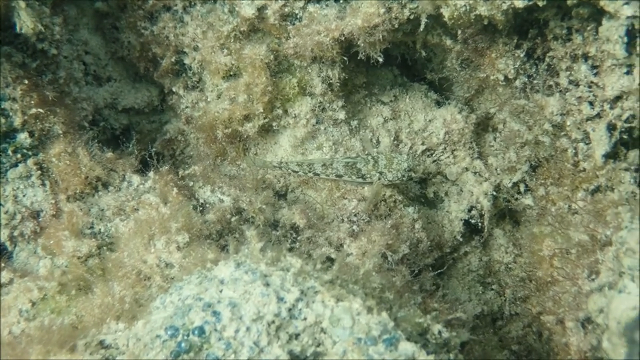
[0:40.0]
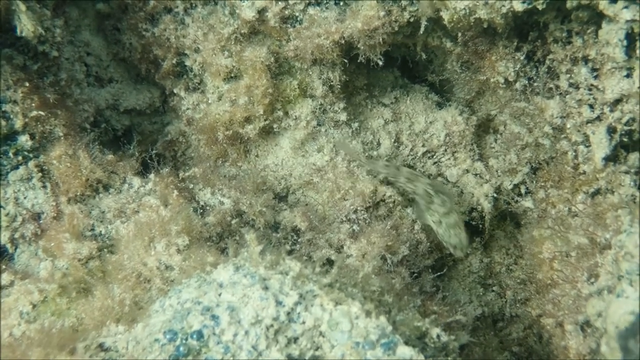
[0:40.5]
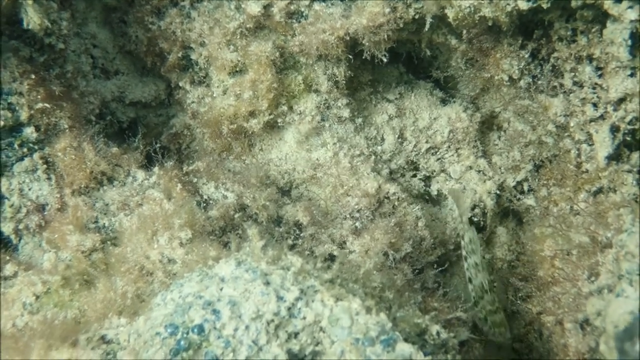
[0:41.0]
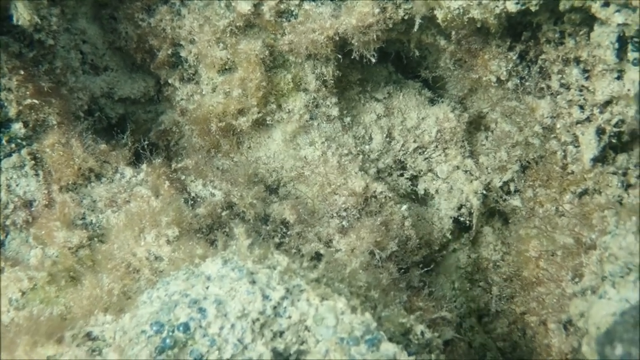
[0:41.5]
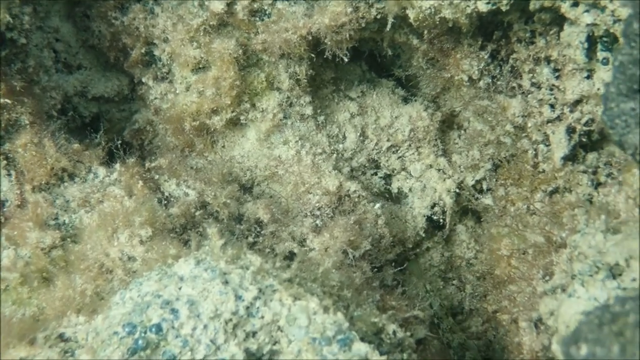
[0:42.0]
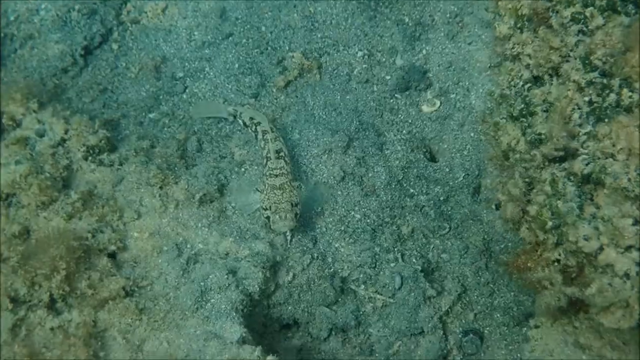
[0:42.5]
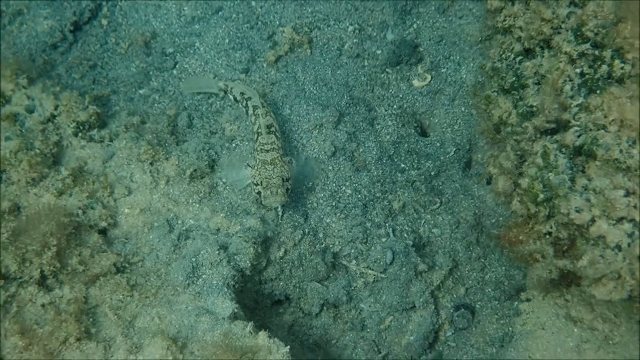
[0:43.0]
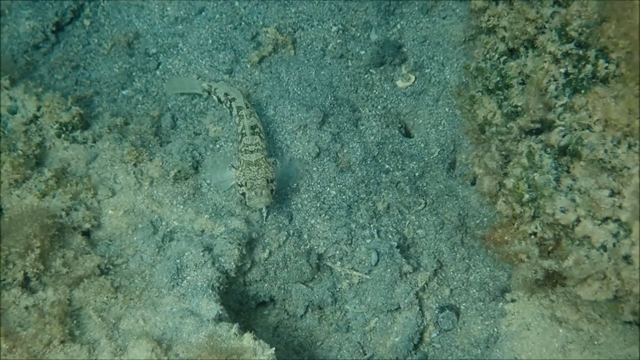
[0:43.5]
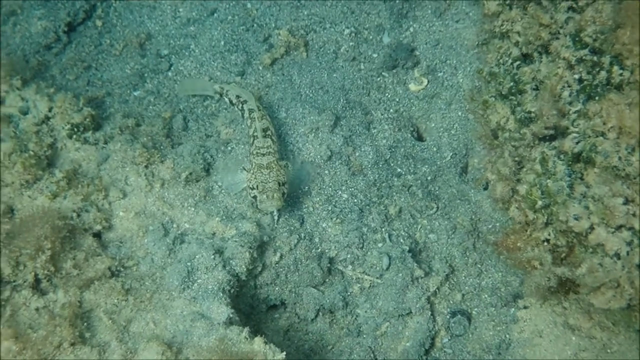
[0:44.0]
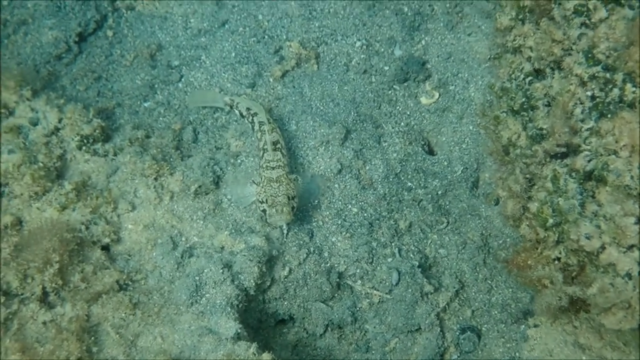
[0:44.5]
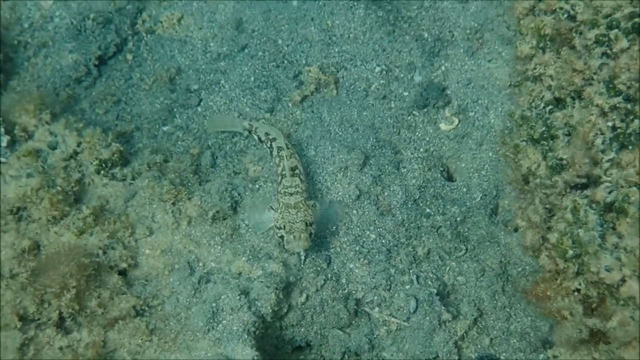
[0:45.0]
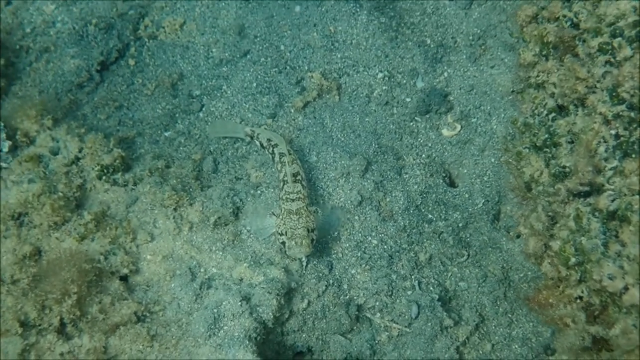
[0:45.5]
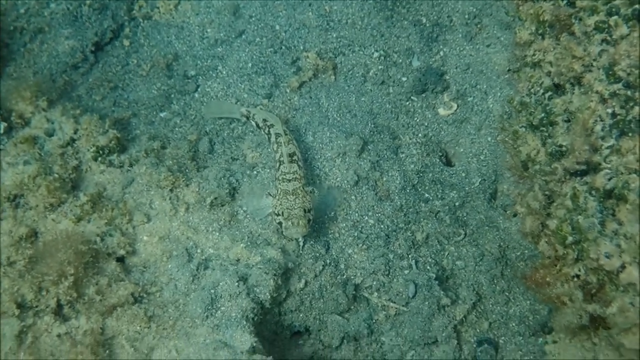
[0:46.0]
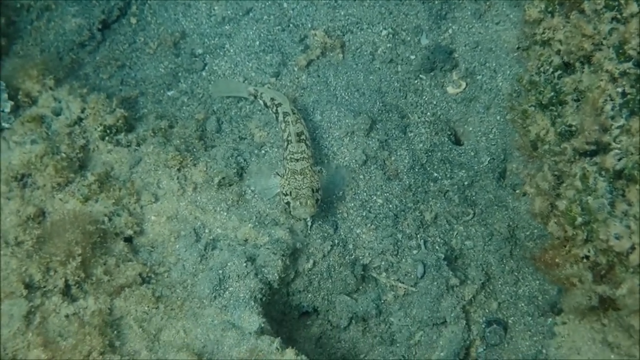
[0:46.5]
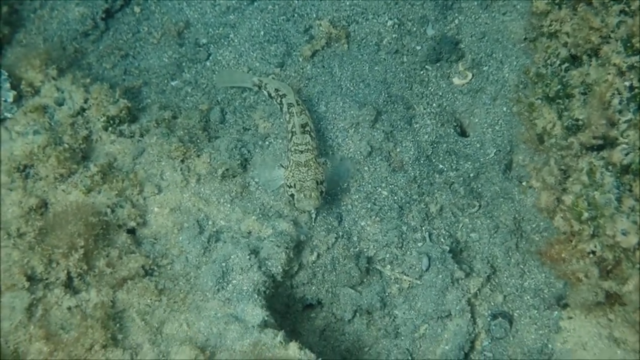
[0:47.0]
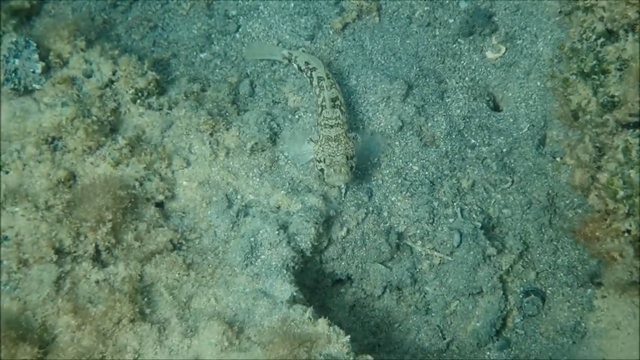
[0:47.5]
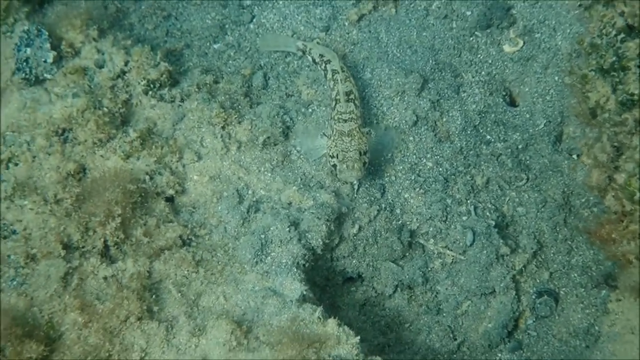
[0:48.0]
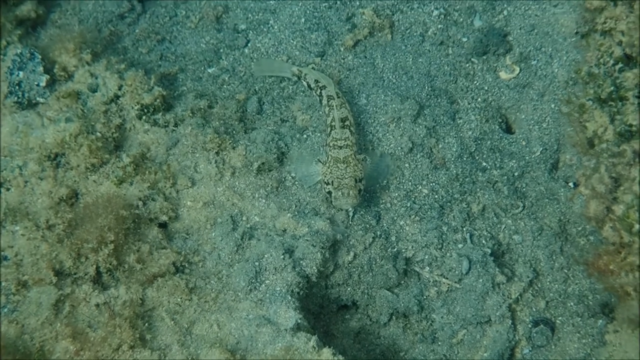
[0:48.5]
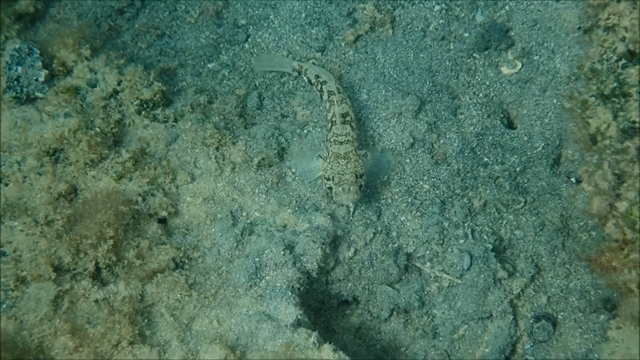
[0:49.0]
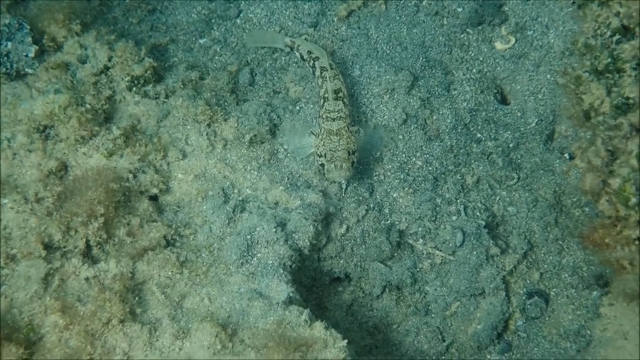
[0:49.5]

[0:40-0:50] The Couch's goby leaves its spot on the reef to hide, swimming quickly down through the ocean. The reef is a neutral mix of beige, gray, black and white. The camera then shows the Couch's goby camouflaging itself near the sand, though it is a little less camouflaged this time because it is not near the reefs or corals. It is somewhat more visible against the gray-beige sand, standing out slightly with its black and white coloring. It is at the bottom of the ocean, near corals, reefs, barnacles and sand.